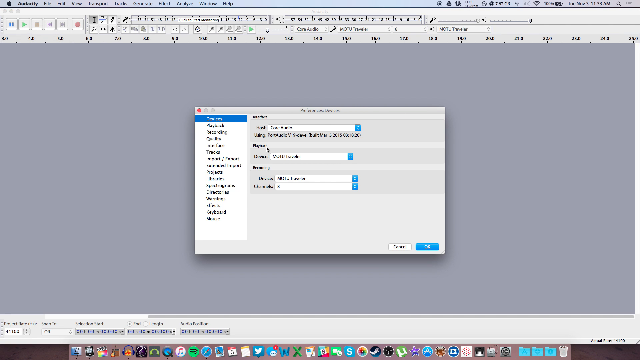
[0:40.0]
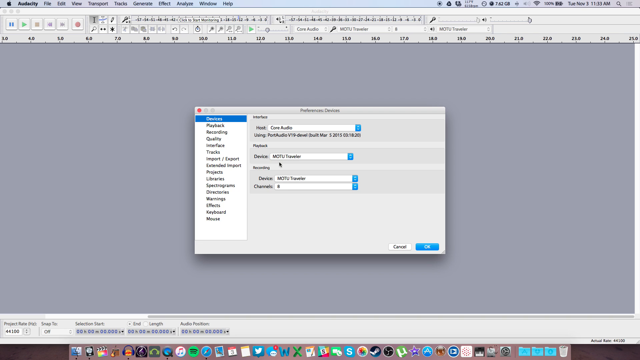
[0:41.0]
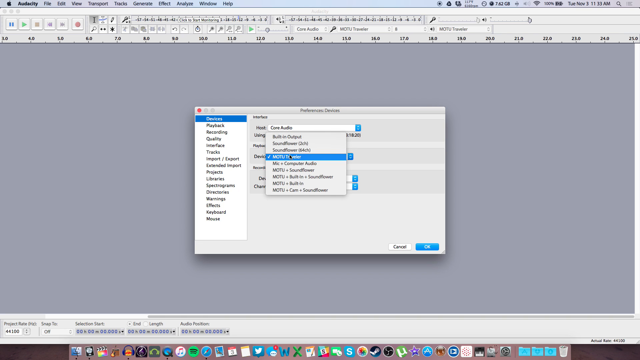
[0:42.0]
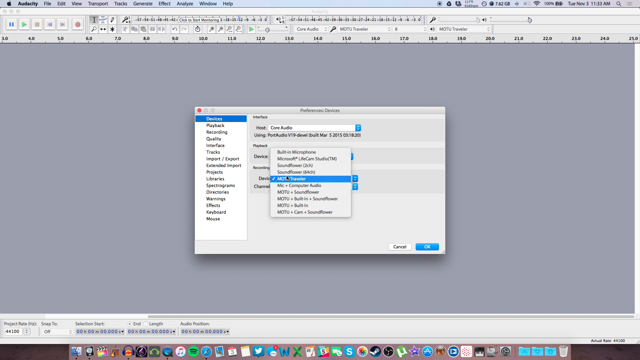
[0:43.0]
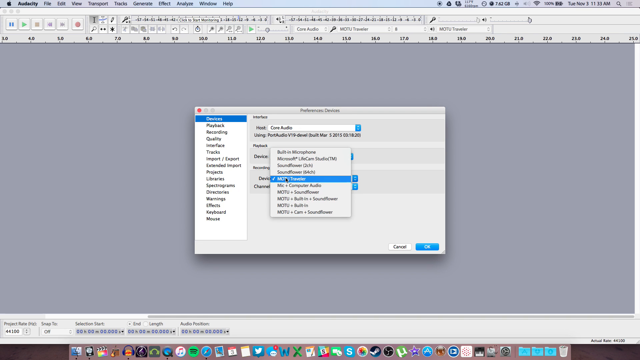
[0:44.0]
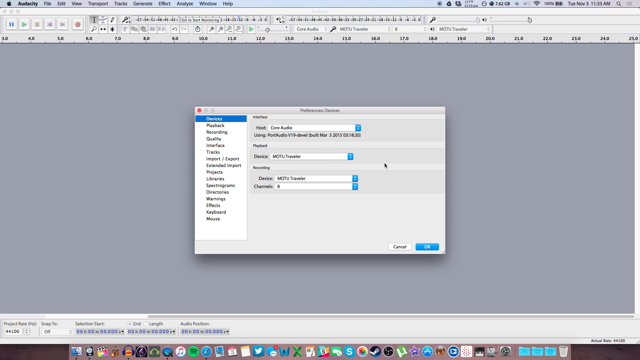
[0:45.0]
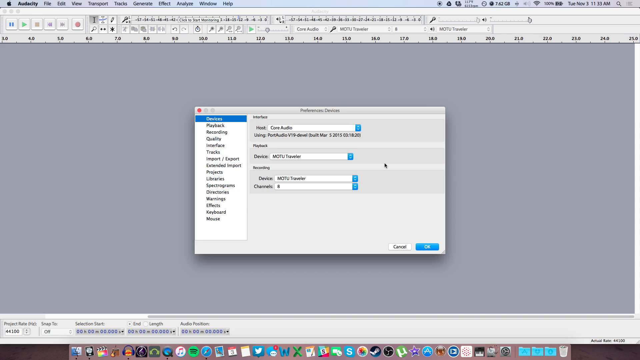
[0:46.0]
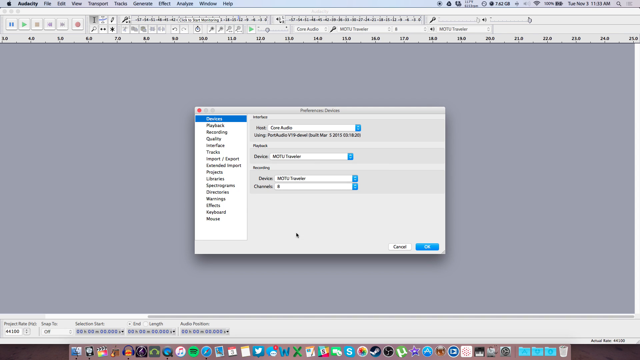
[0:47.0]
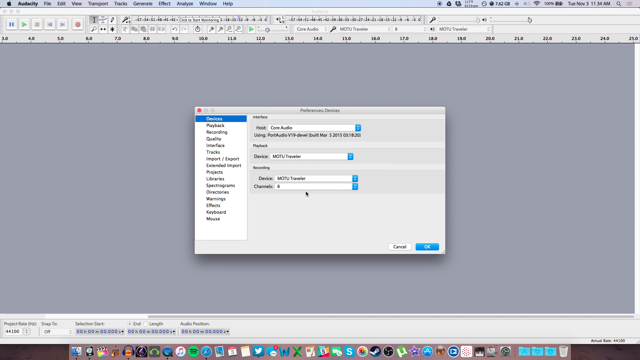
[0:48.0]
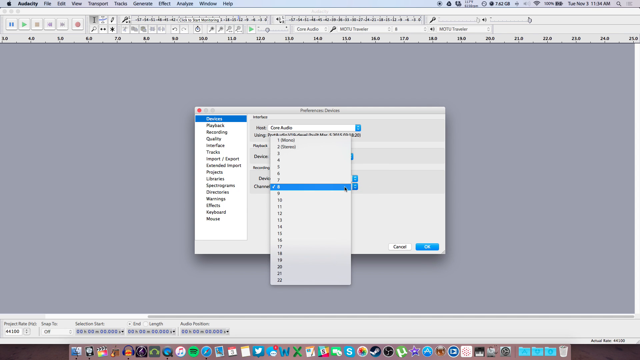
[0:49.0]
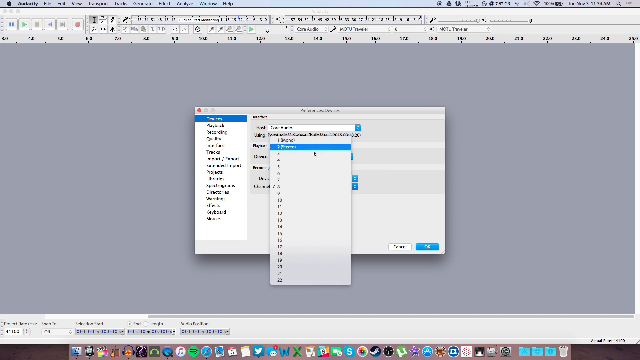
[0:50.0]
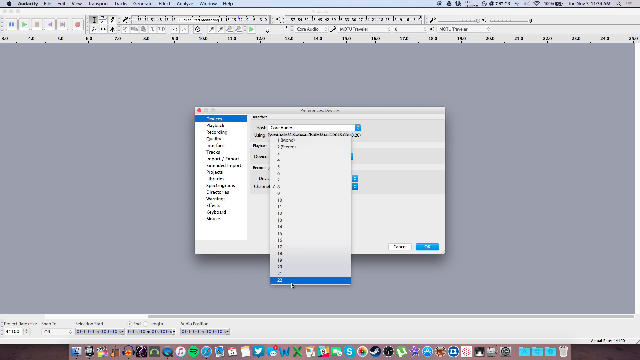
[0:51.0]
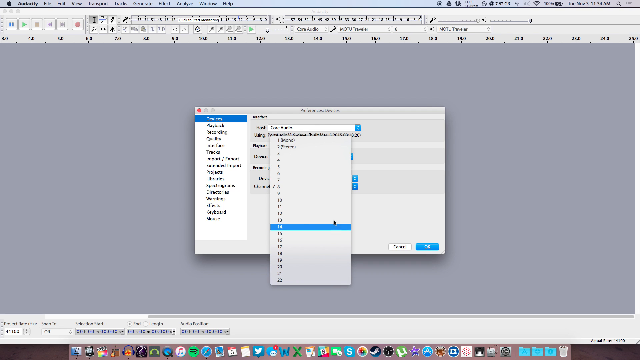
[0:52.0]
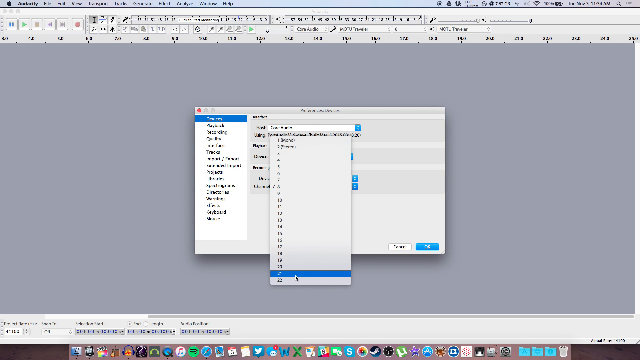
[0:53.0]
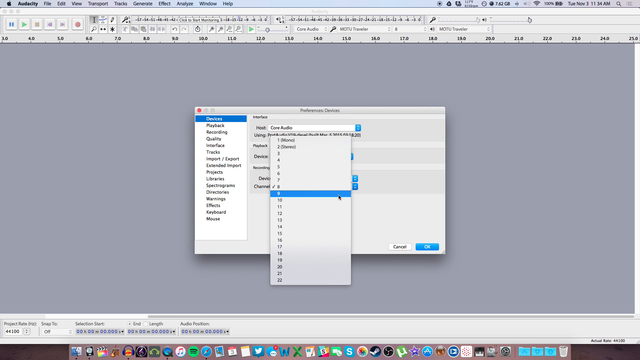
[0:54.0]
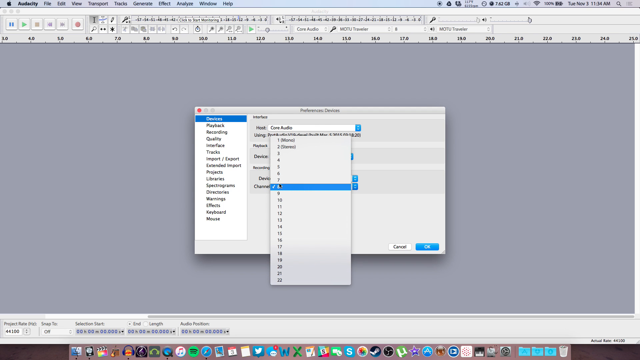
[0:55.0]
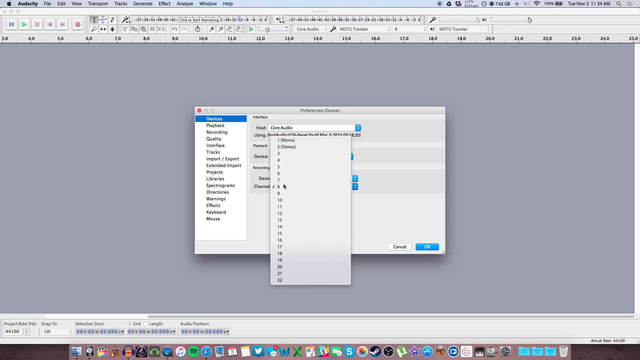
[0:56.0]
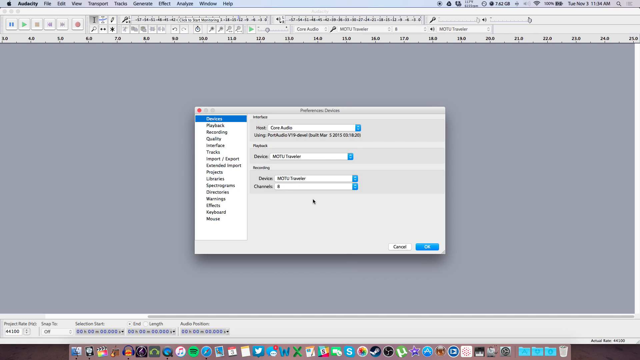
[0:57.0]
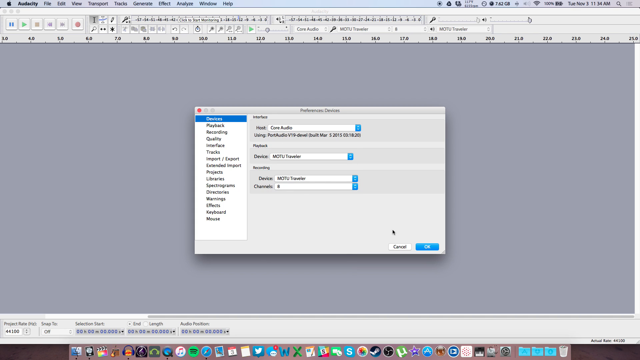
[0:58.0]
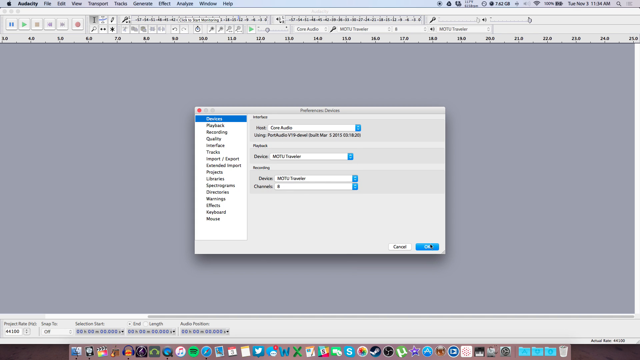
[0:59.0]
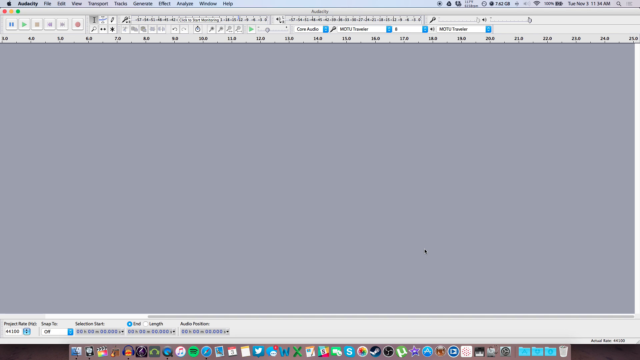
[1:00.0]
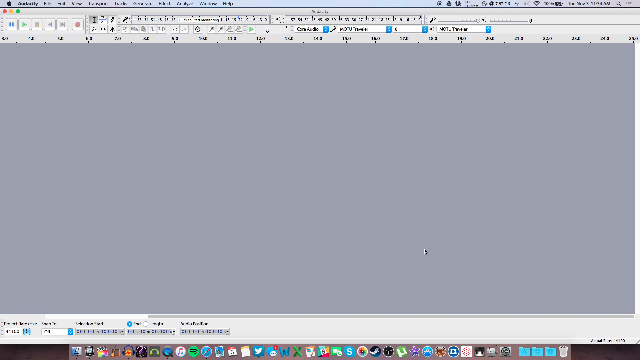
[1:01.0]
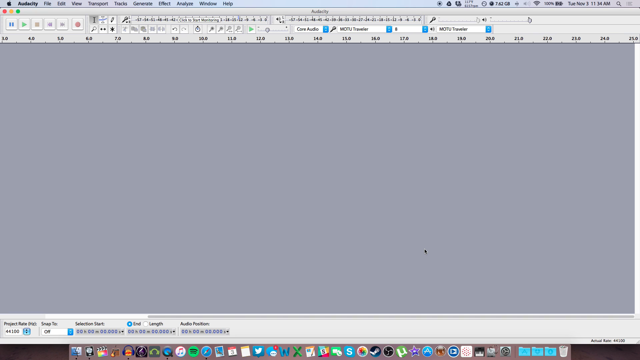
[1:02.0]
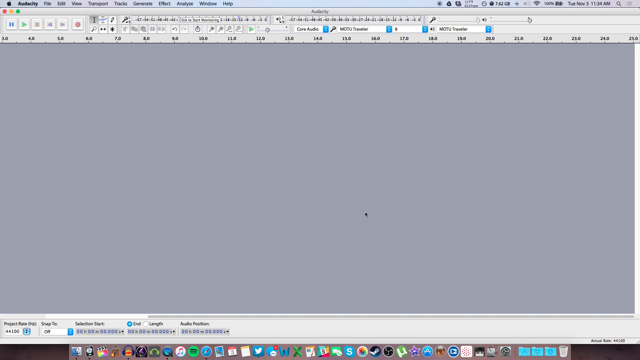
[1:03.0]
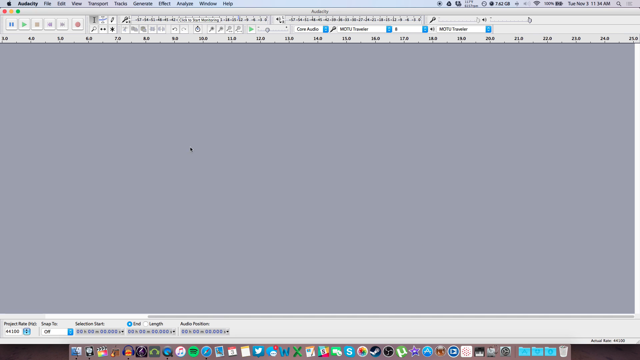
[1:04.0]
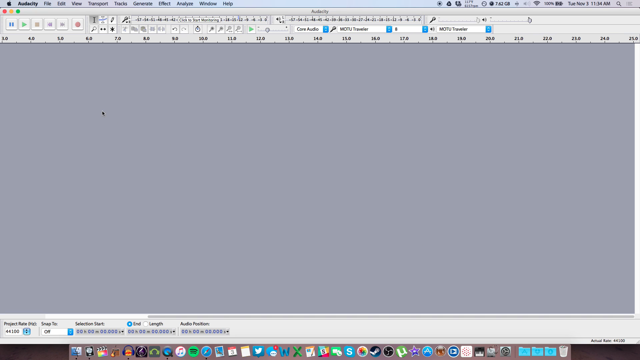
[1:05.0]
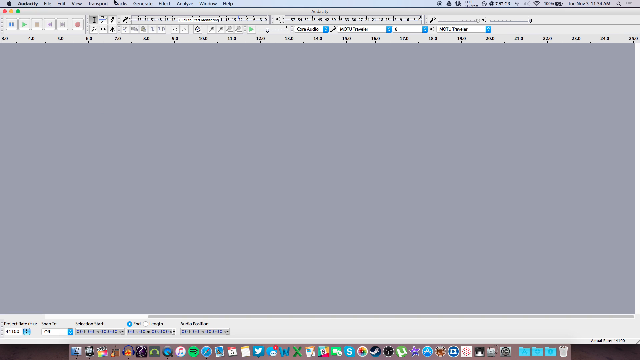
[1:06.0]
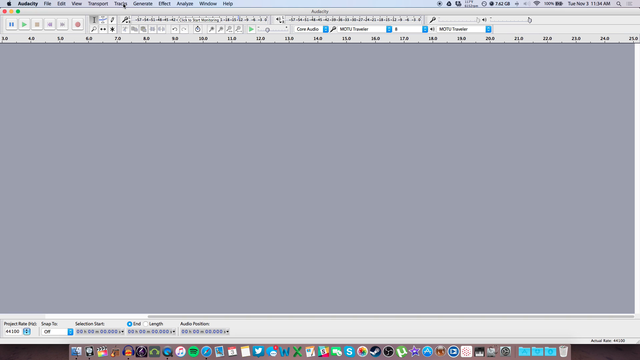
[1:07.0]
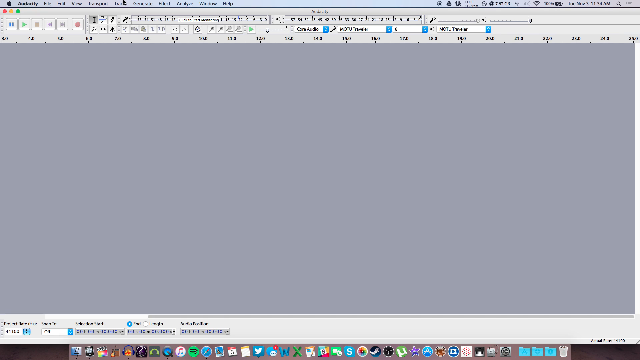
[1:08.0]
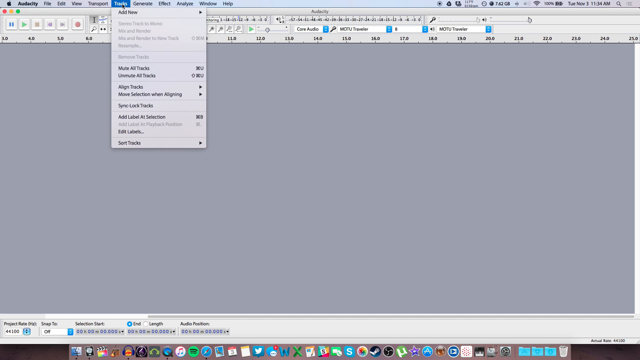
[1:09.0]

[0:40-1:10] Still in the program, a pop-up is open. On its left side there appear to be maybe 12 options; it is a little blurry, but they include device, playback, recording, quality, tracks, libraries, project and keyboard. On the other side are four features, each with an arrow for a drop-down, including channels and devices, with items already selected. The mouse clicks on the drop-down menus and selects the desired options. One open menu appears to show devices numbered from 1 down to 22, and the number 8 looks to be selected. Once it is selected, they hit OK.